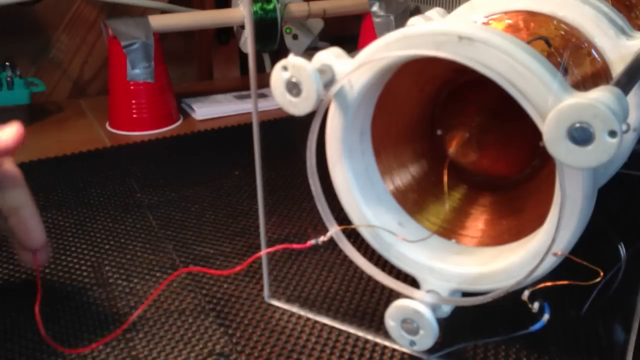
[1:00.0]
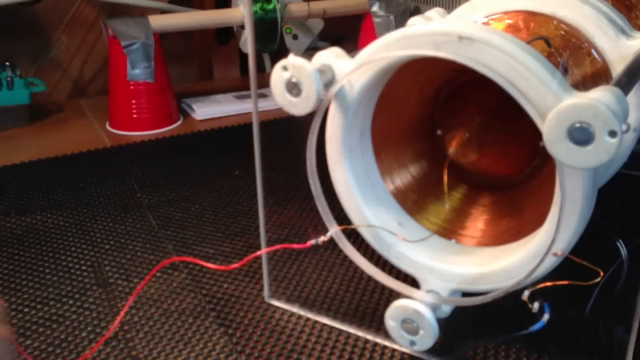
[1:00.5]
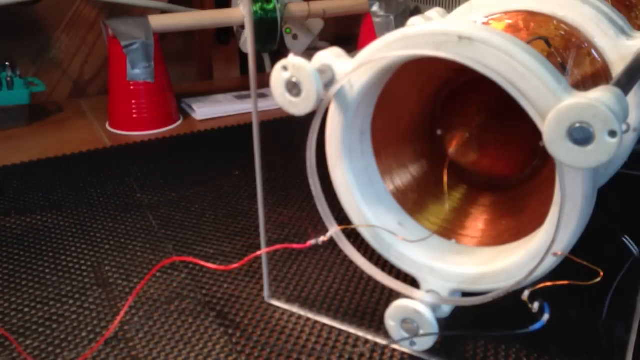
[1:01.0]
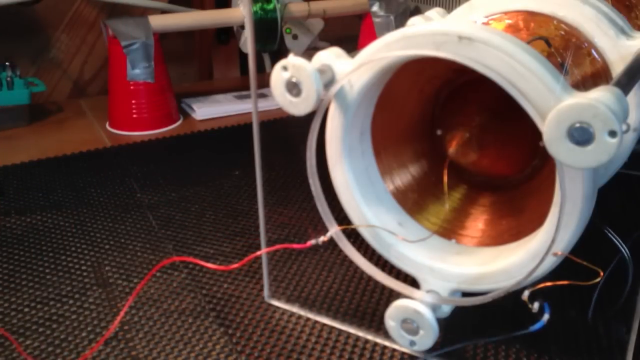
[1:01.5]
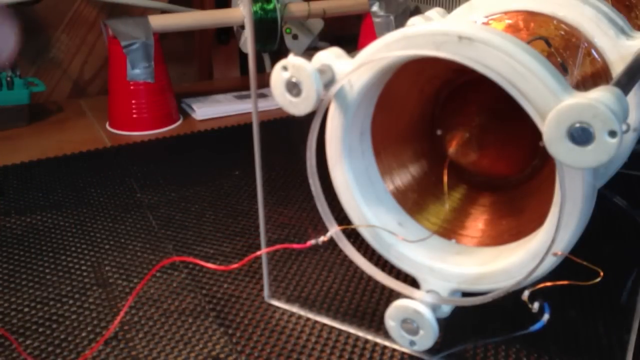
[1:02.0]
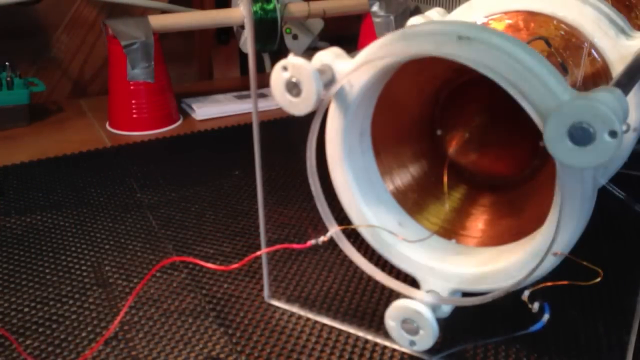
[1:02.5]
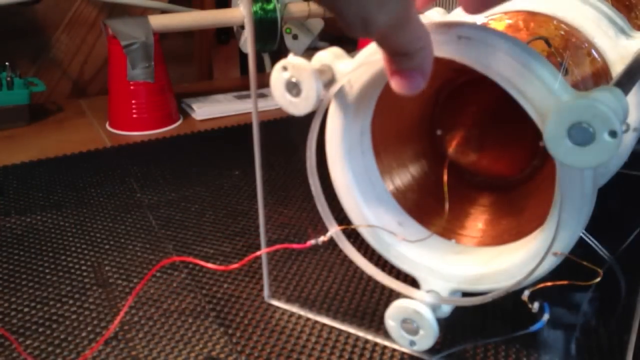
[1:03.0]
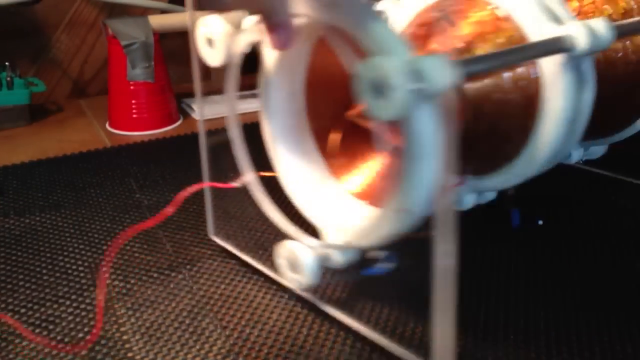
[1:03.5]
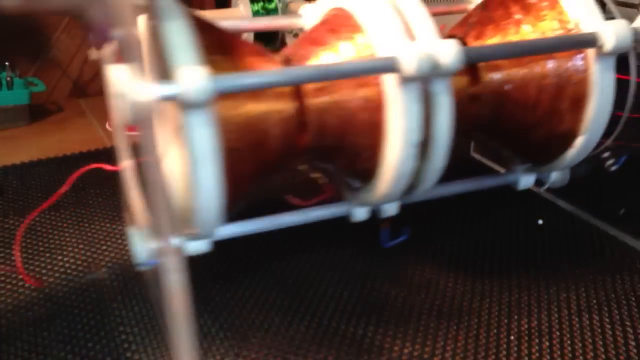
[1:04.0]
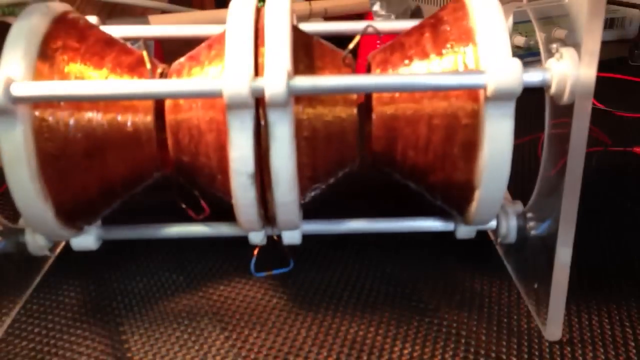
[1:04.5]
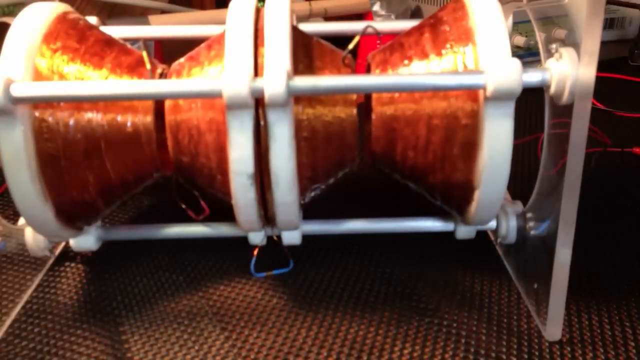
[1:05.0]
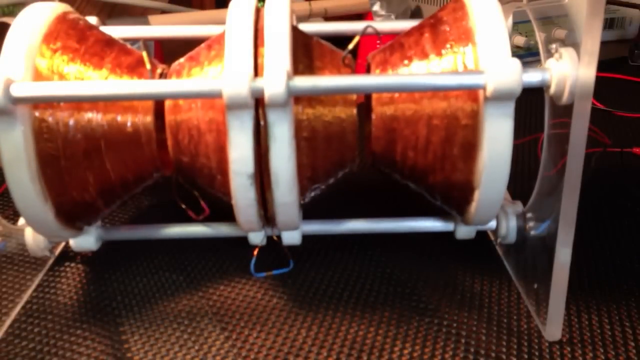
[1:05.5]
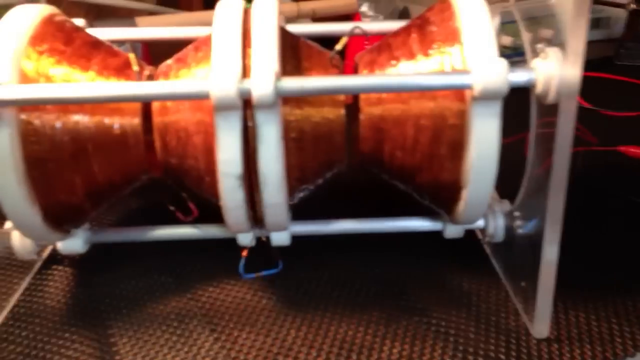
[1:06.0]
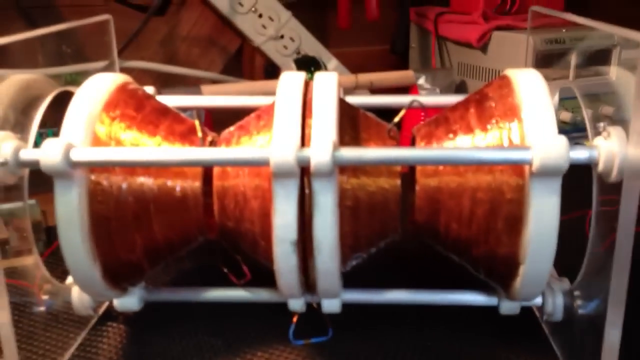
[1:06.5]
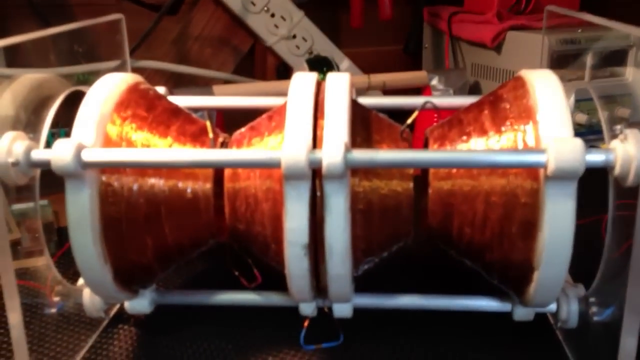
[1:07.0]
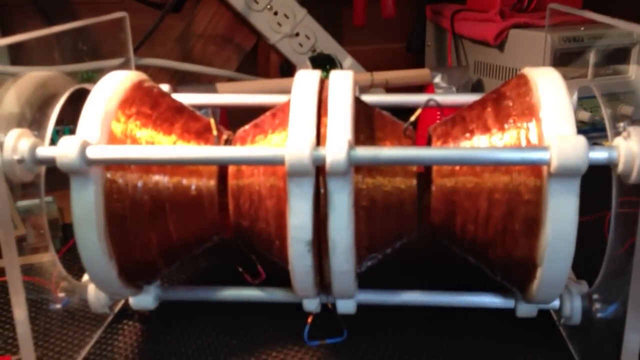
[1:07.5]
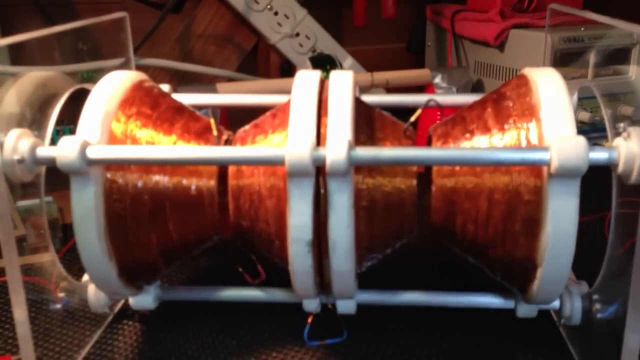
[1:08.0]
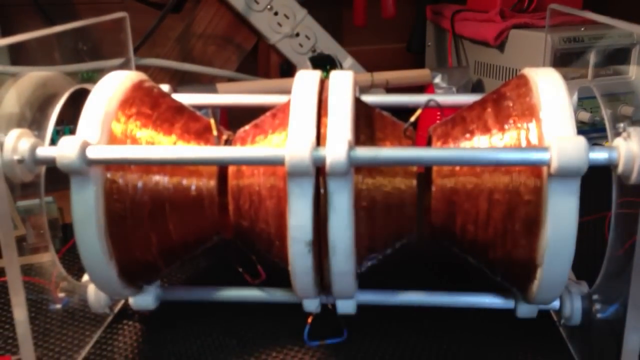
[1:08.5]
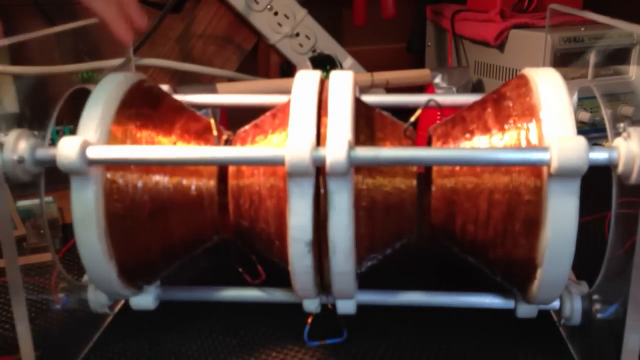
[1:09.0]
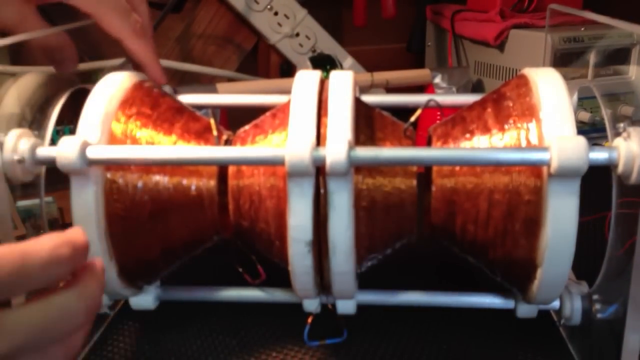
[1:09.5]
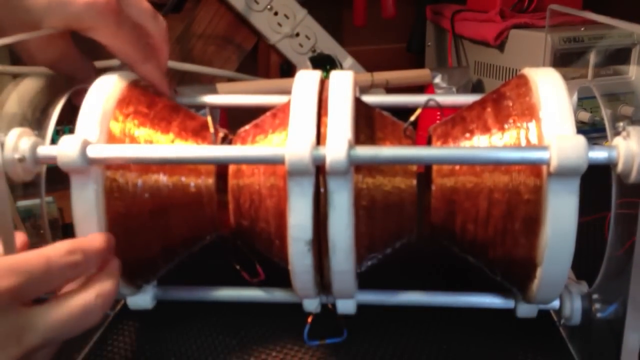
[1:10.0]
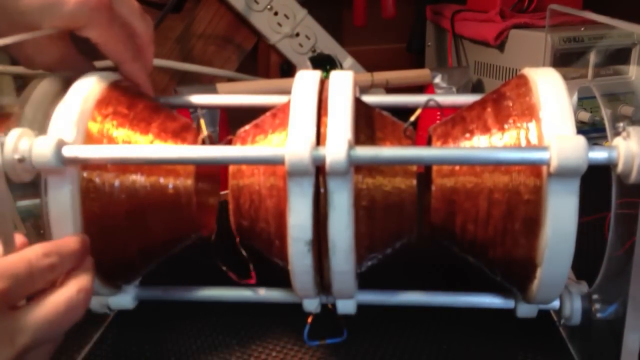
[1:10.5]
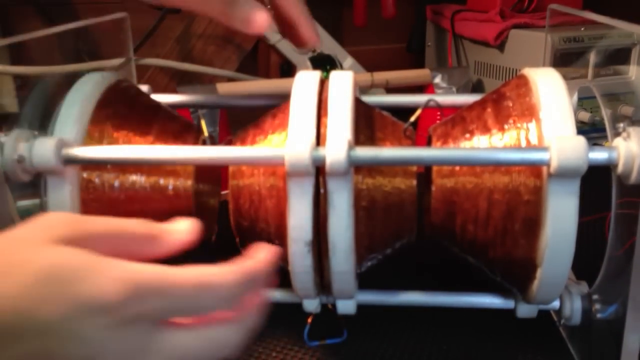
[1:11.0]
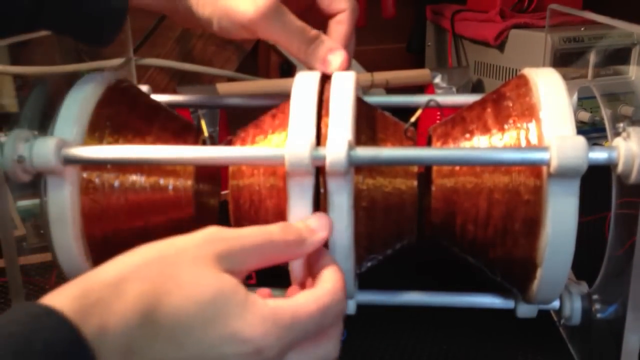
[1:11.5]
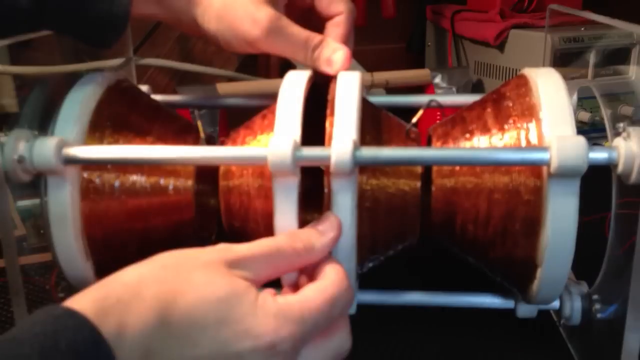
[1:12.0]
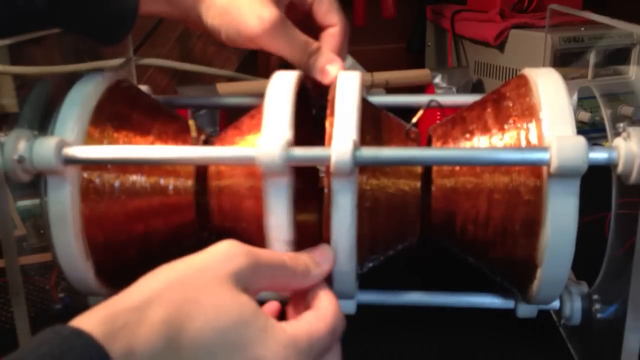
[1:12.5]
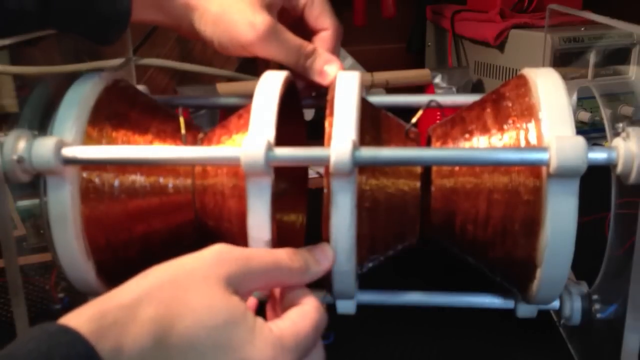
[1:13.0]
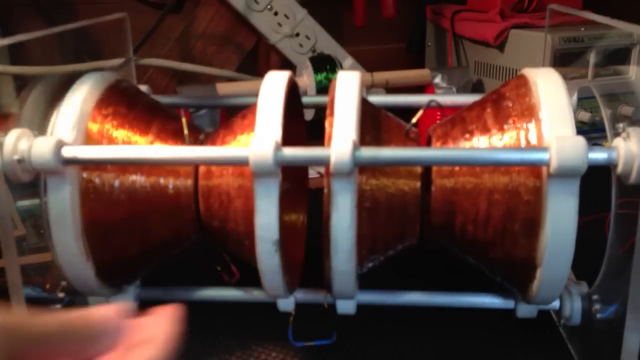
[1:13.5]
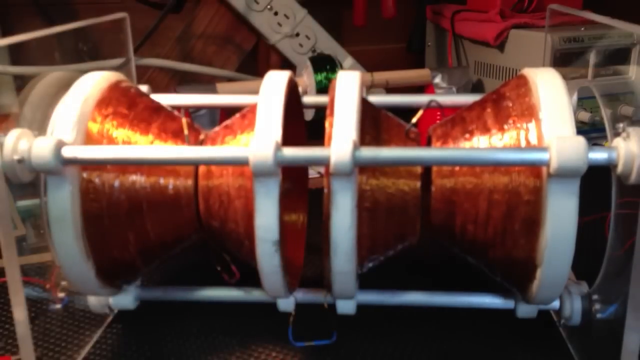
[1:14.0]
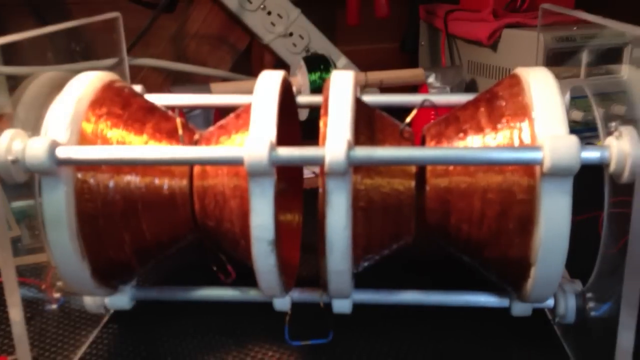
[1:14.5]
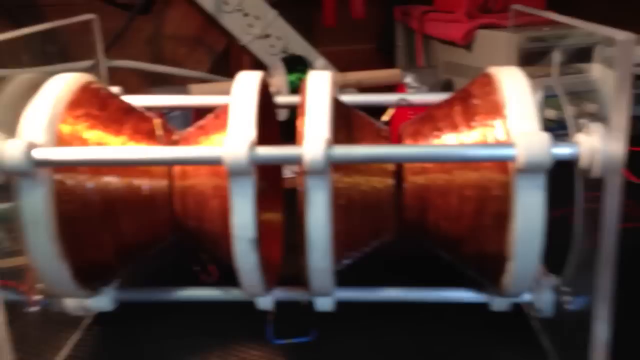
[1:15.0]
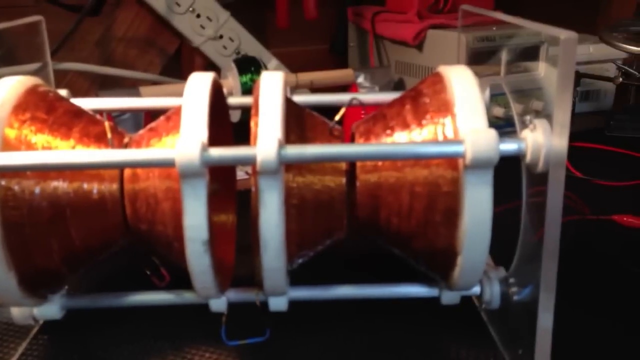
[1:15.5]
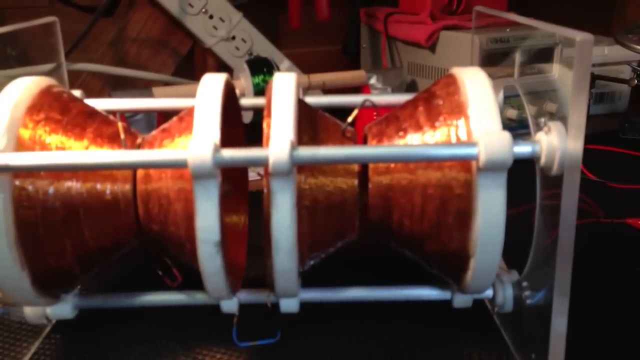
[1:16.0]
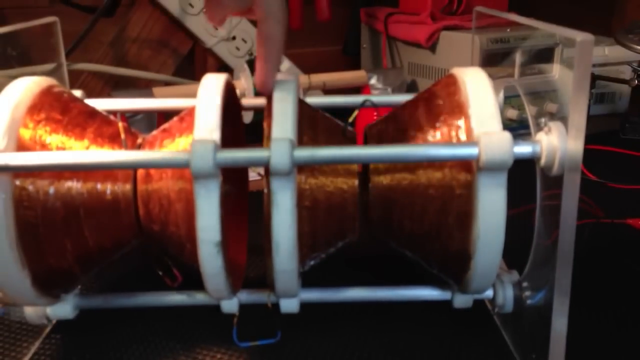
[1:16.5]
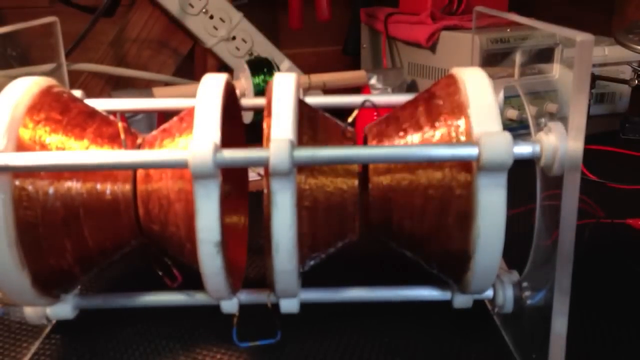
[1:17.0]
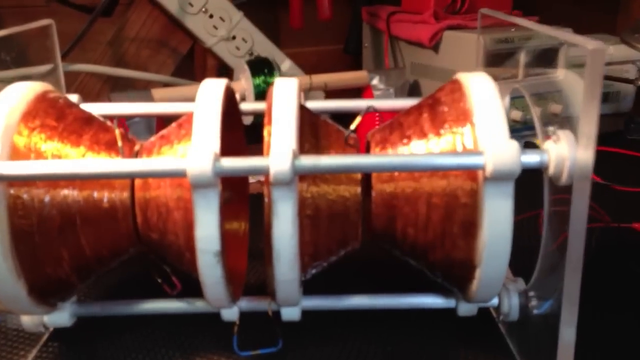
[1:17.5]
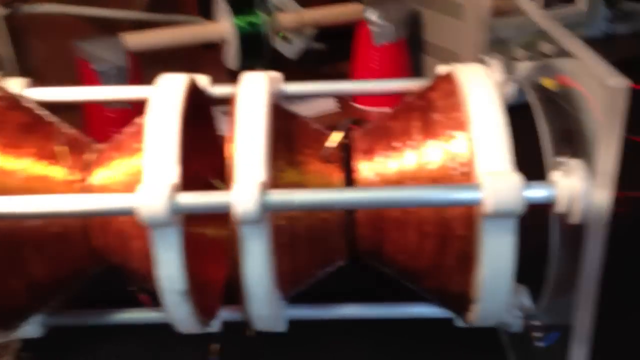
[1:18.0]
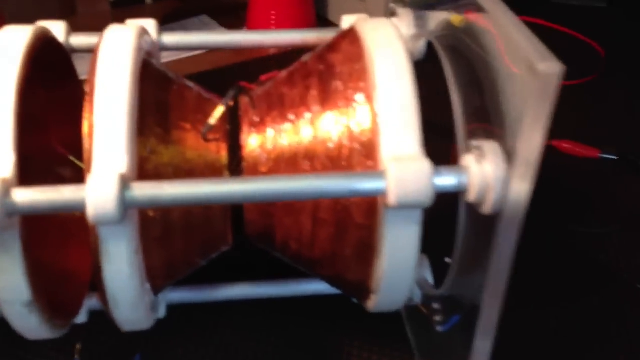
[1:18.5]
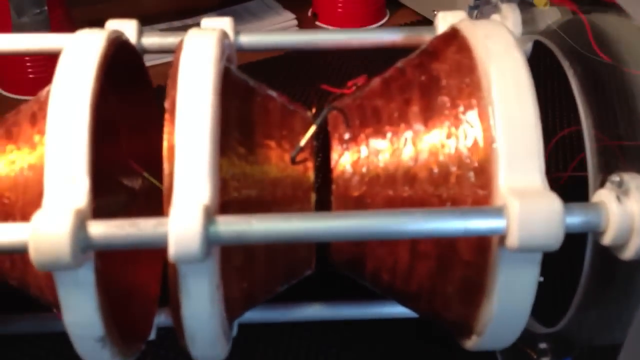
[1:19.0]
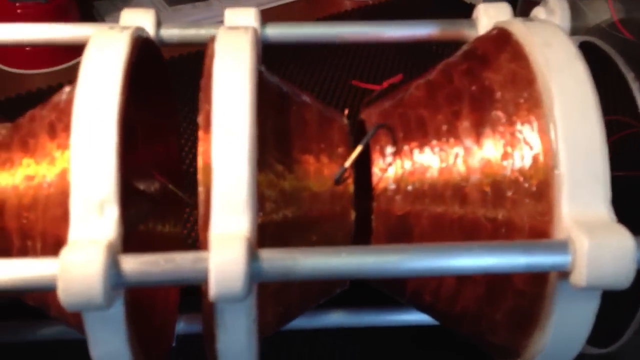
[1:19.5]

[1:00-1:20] The person picks up the cylinder-type object with his left hand and moves it across, revealing the right-hand side of the device. The parts appear to be movable, and he separates them into what look like four distinct parts, sort of bone-shaped with a hollow center. He moves them apart, creating a larger gap of about one inch between the two large objects, and bits of wire can be seen connected to them. The camera moves overhead to the top right of the device, showing the gap more closely.